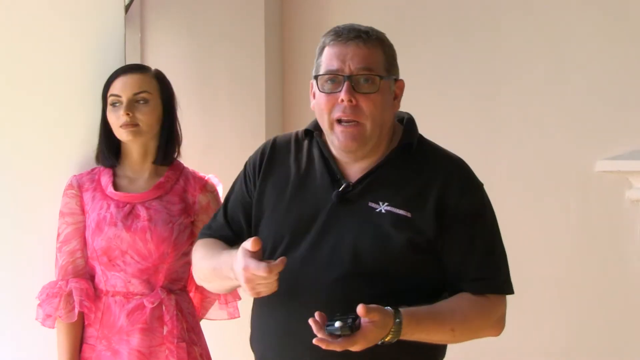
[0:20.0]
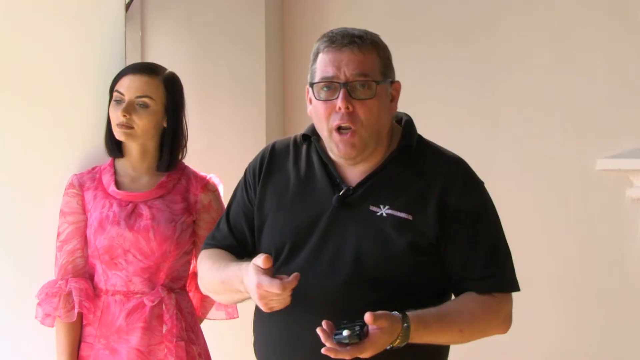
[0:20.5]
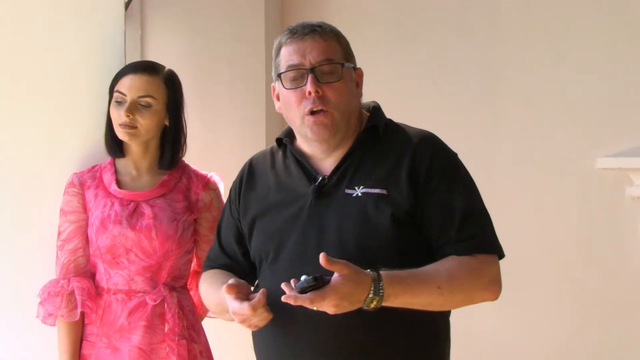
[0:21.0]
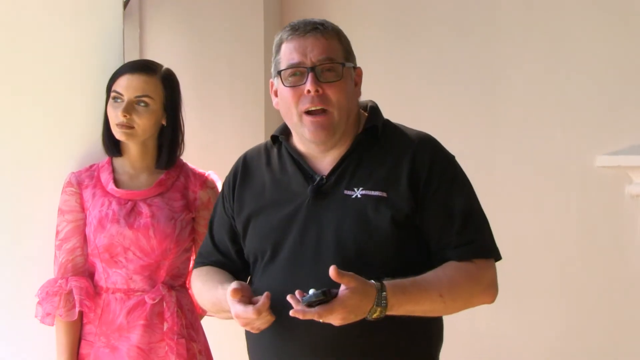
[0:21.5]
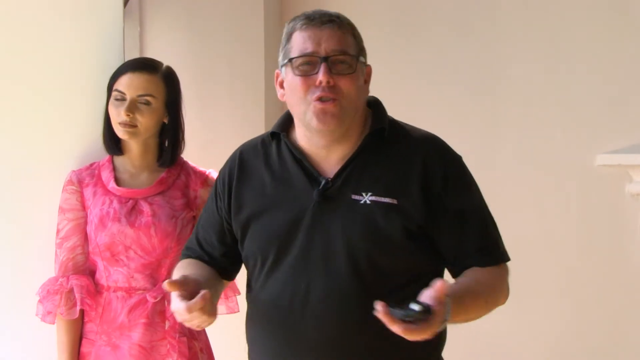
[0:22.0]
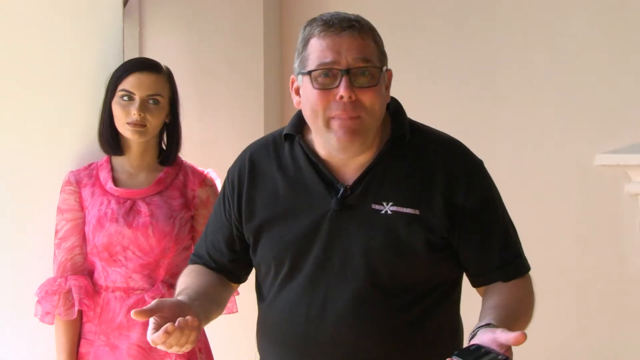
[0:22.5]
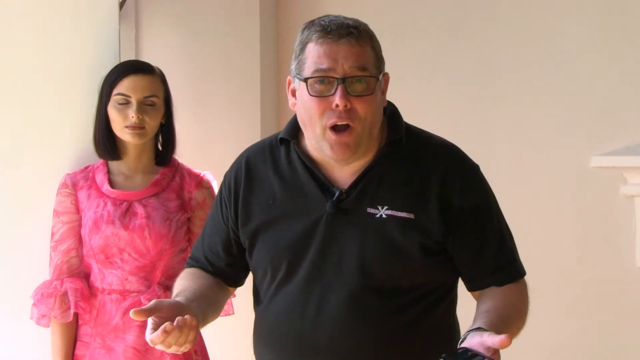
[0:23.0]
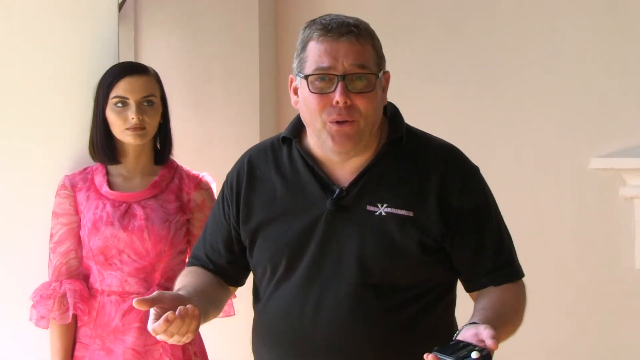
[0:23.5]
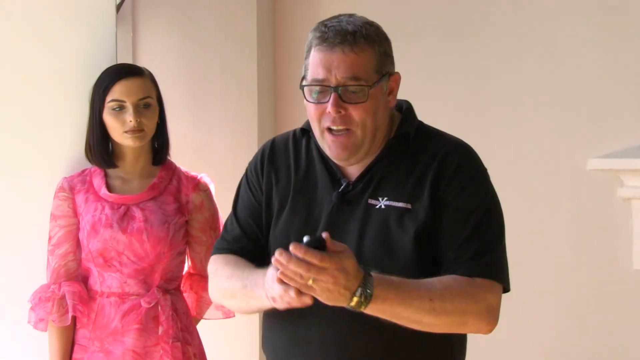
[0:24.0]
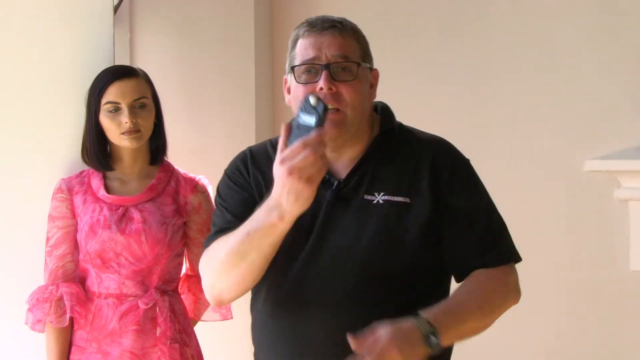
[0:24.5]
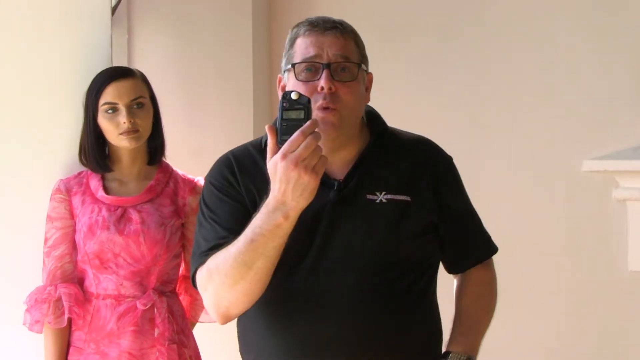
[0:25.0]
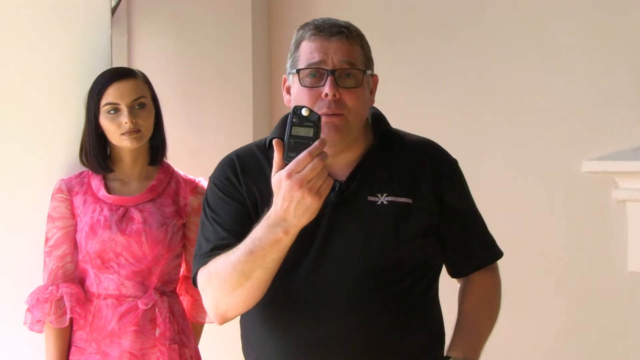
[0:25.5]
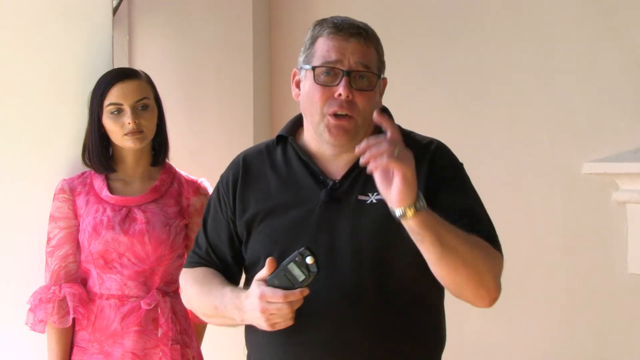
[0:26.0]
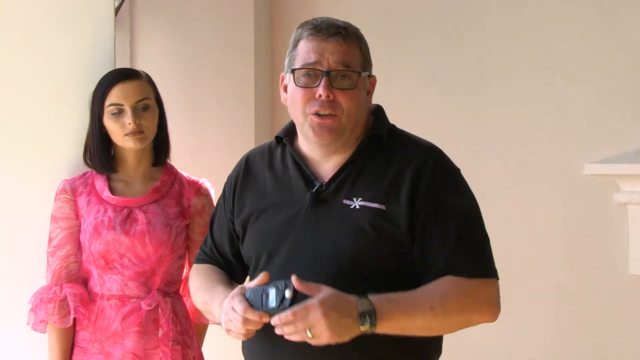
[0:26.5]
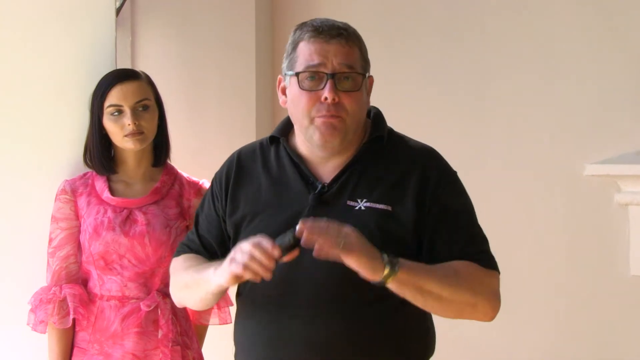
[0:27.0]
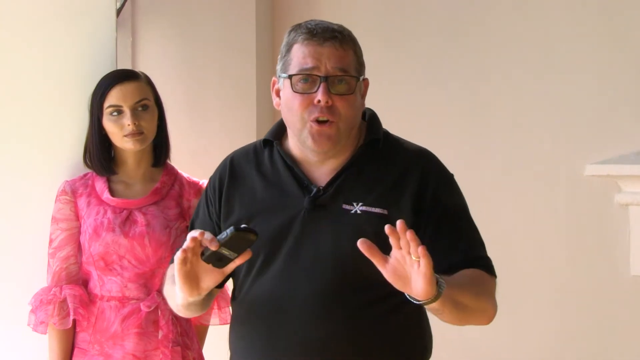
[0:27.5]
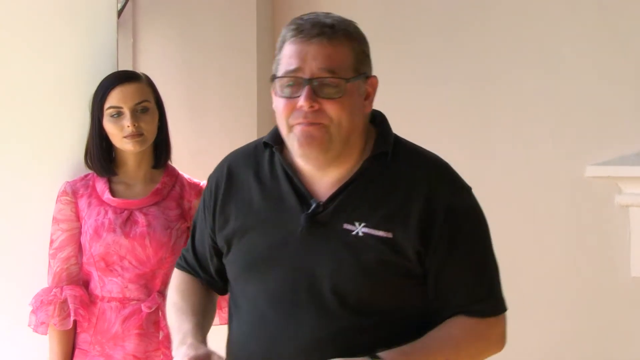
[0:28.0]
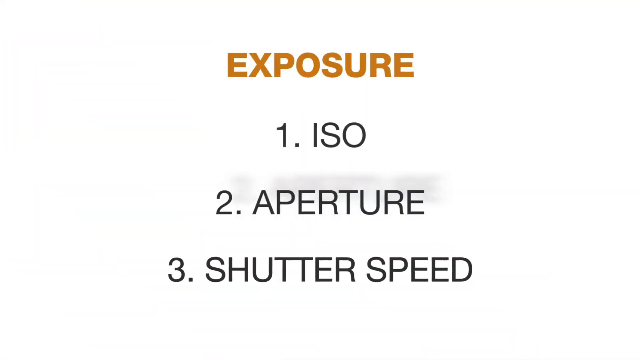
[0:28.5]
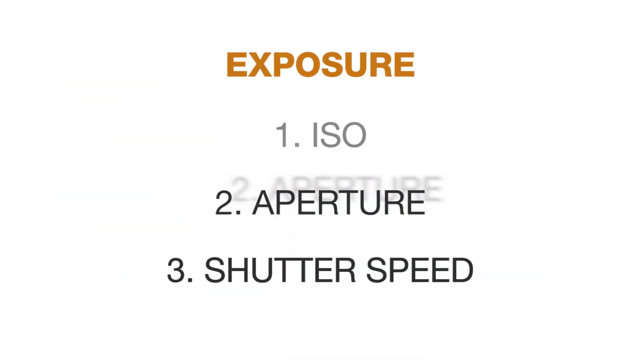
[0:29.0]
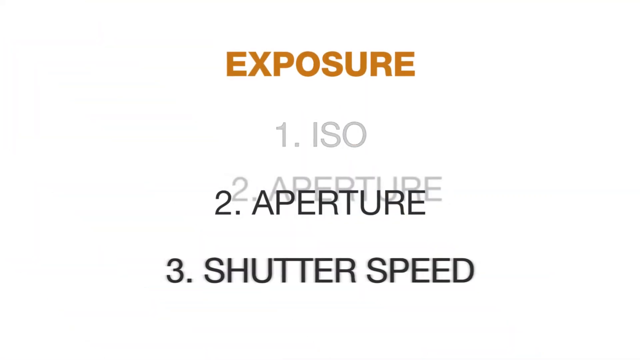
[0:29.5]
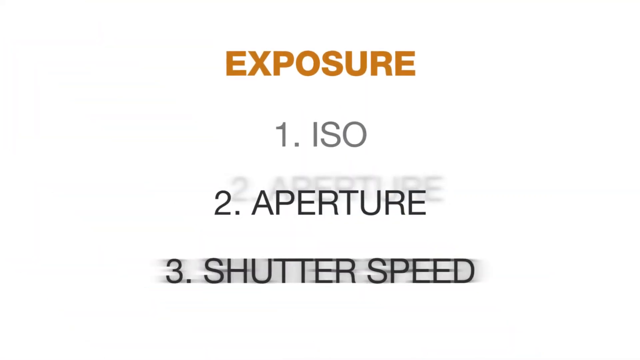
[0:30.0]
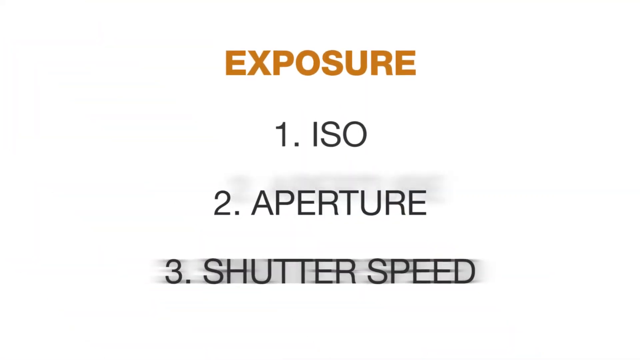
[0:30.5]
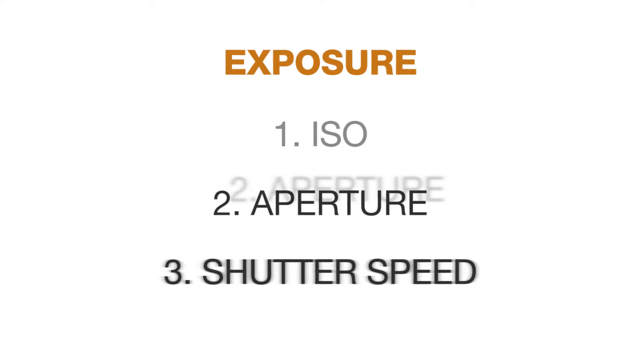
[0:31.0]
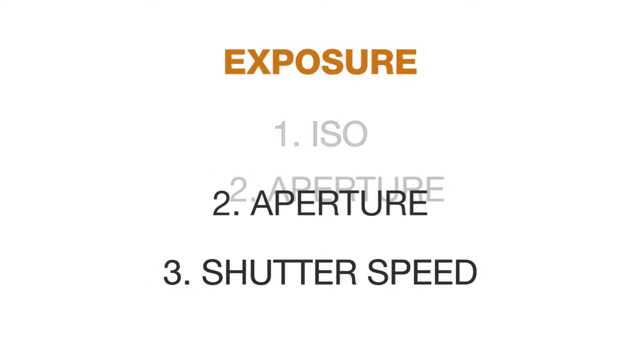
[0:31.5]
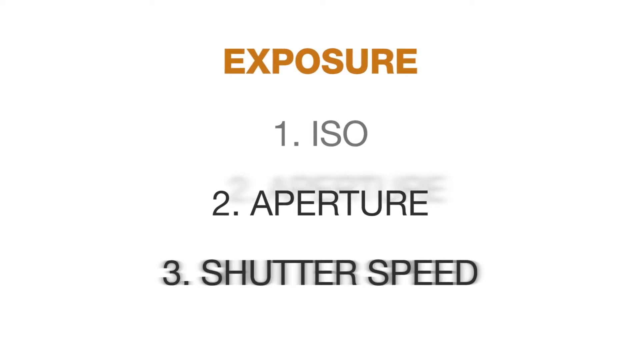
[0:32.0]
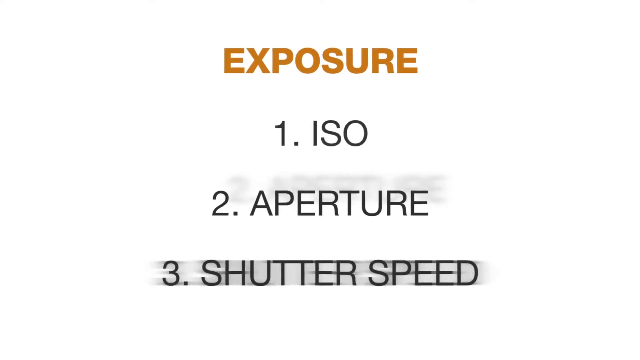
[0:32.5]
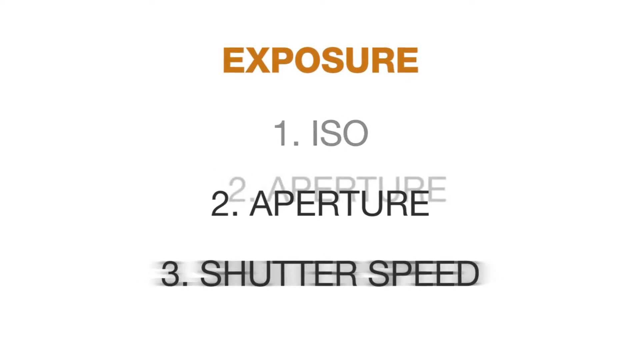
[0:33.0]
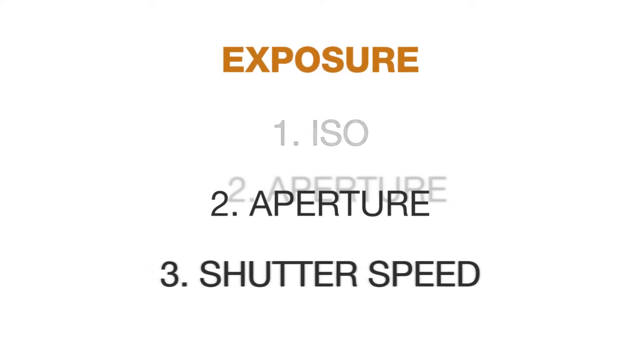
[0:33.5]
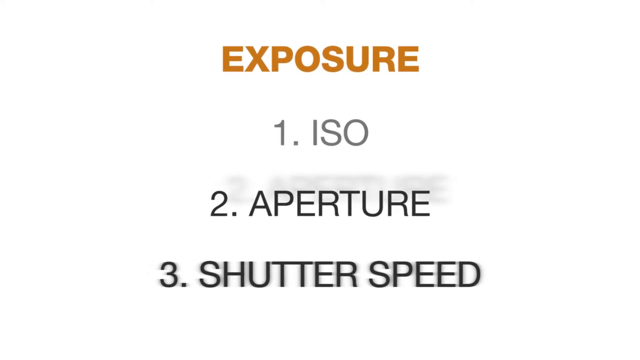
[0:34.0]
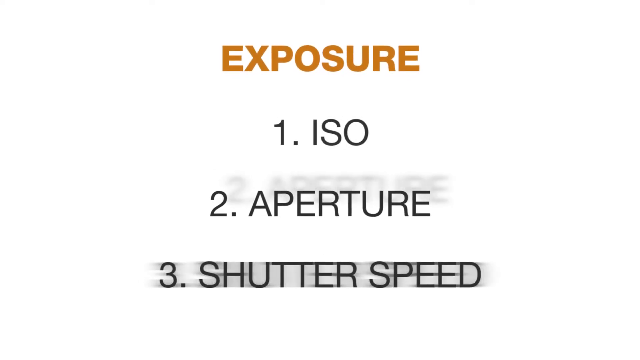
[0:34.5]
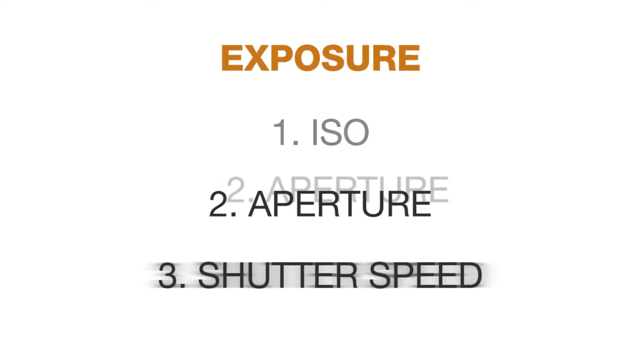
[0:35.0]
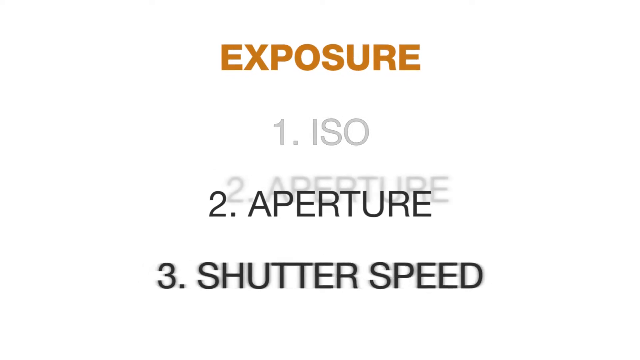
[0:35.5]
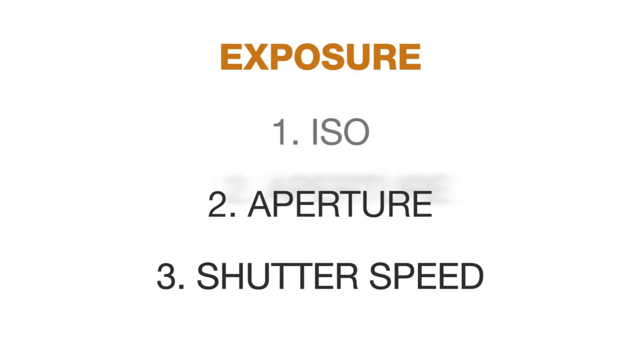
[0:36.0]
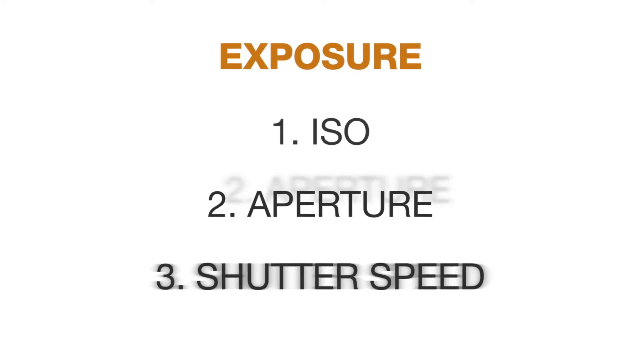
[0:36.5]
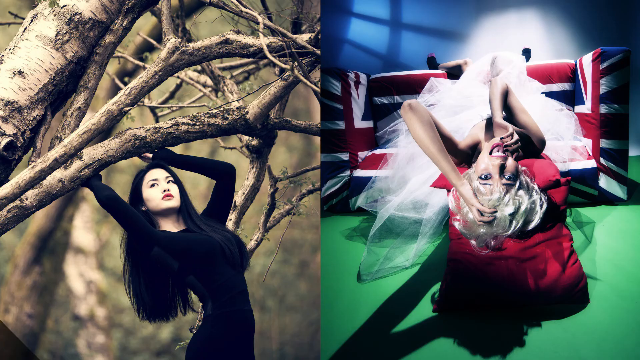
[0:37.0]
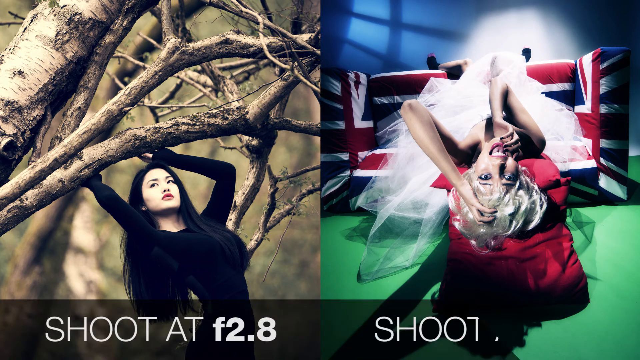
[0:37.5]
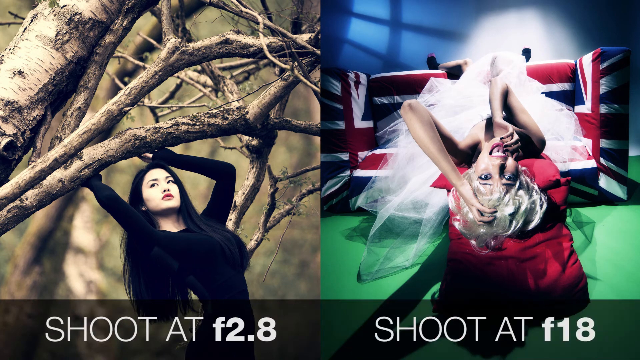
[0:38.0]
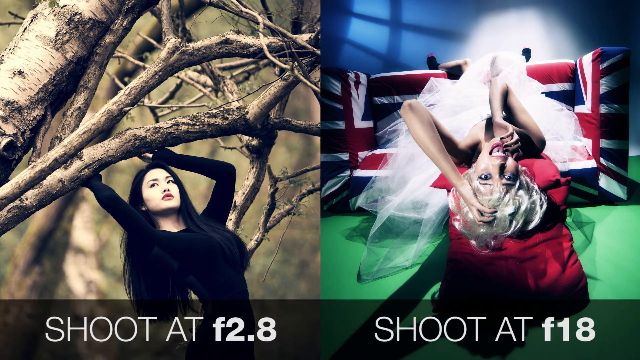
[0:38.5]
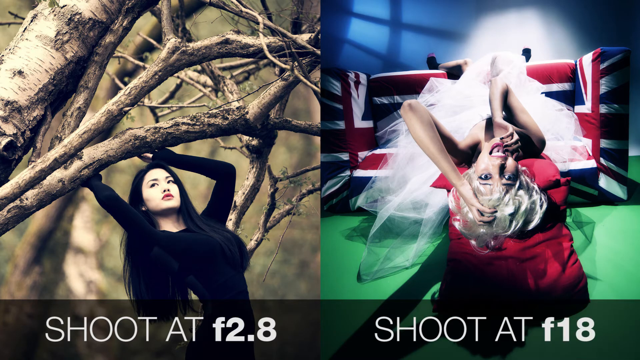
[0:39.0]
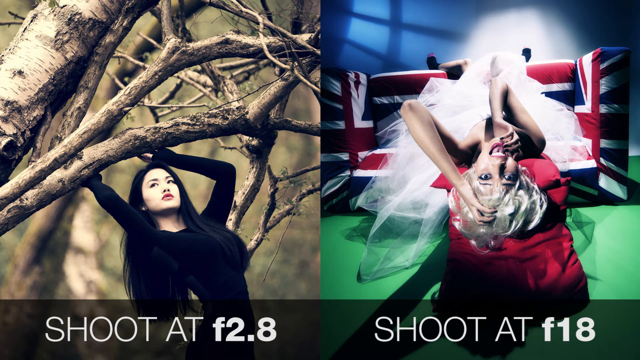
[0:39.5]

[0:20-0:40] The man still has the device and shakes it around, showing what it does. He moves around excitedly, showing it off and pointing his fingers. The screen then changes to text reading "exposure," with "1. ISO," underneath it "2. aperture," and underneath that "3. shutter speed." After this screen displays for a while, it switches to a couple of photos taken with the device using different settings. One shows a woman hanging off a tree, with shadows; the picture next to it shows a woman lying down, hanging off a couch, with lots of shadows and texture. Under the images are the settings used to take them: one is shot at "f.28" and the one on the right at "f18." After the photos, the video returns to the man and the woman.